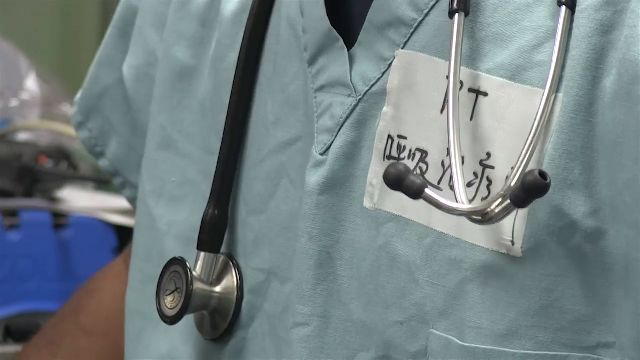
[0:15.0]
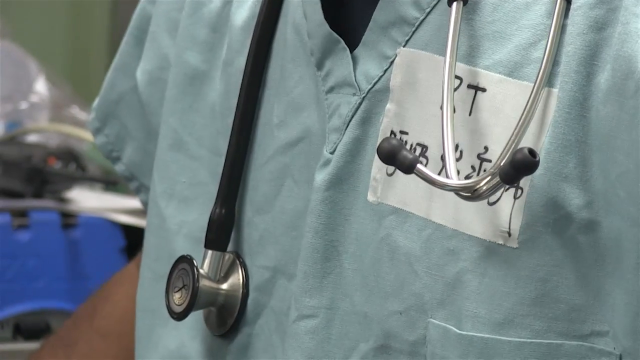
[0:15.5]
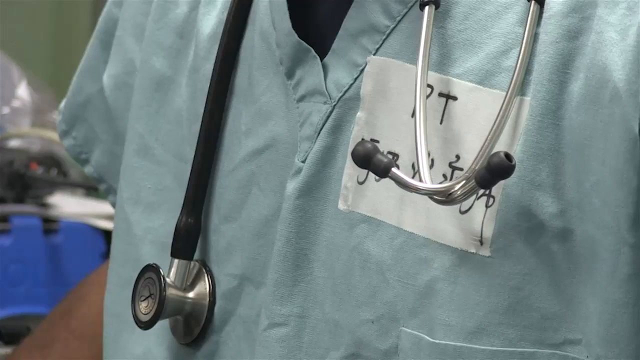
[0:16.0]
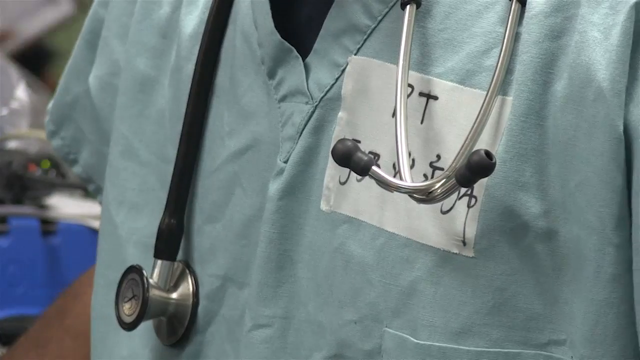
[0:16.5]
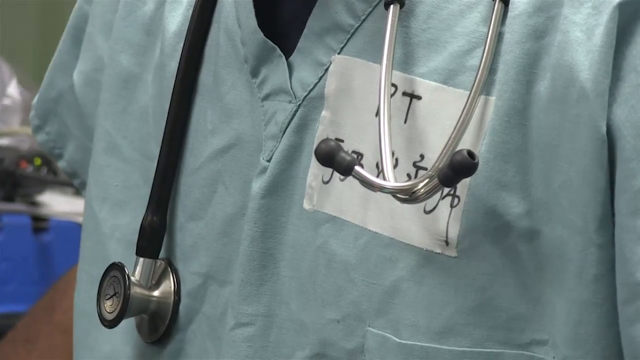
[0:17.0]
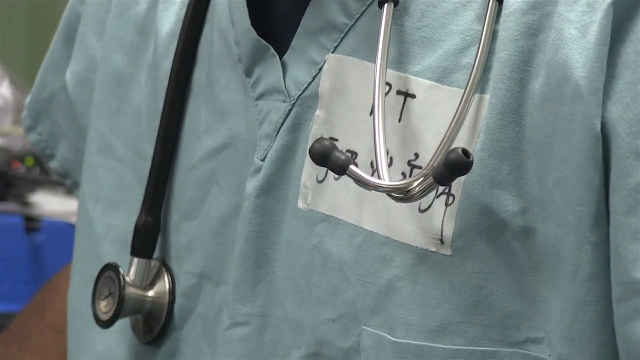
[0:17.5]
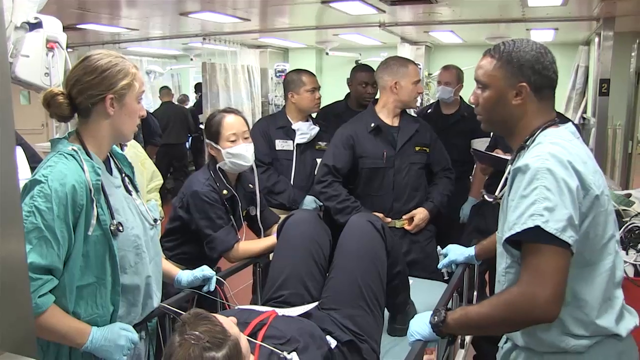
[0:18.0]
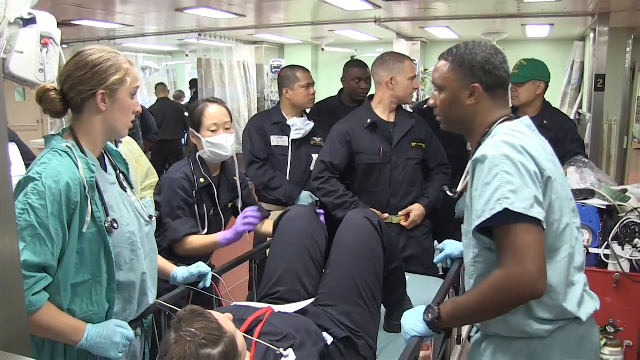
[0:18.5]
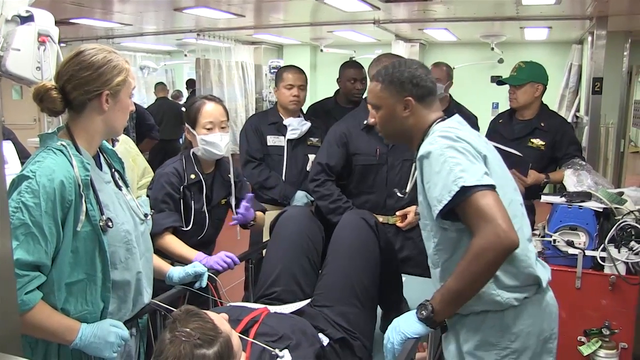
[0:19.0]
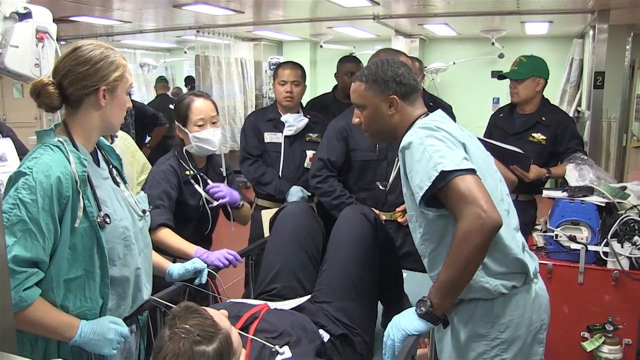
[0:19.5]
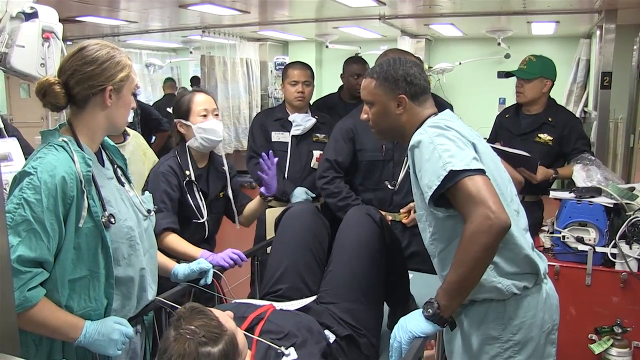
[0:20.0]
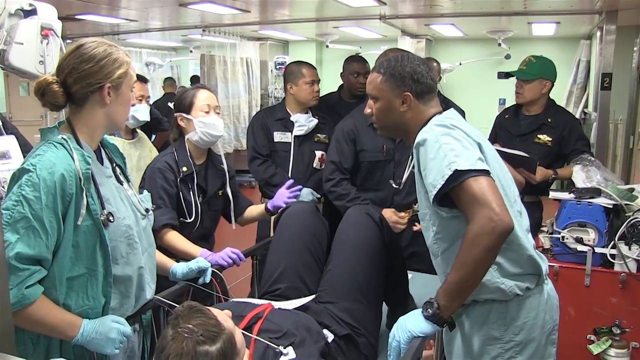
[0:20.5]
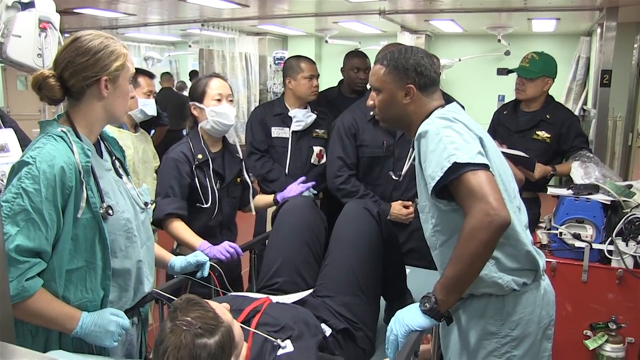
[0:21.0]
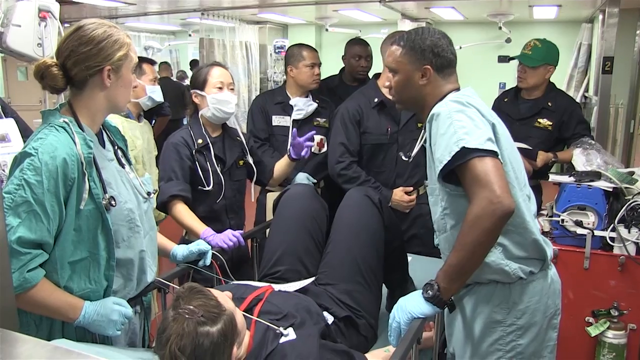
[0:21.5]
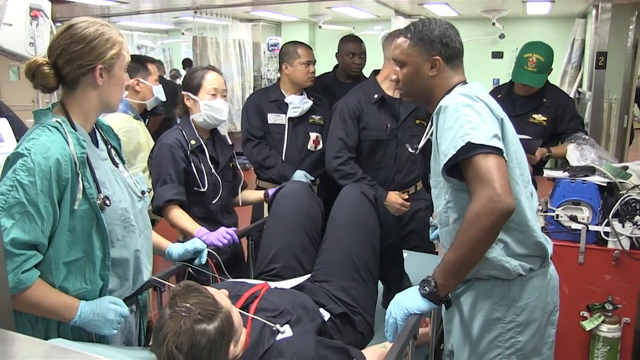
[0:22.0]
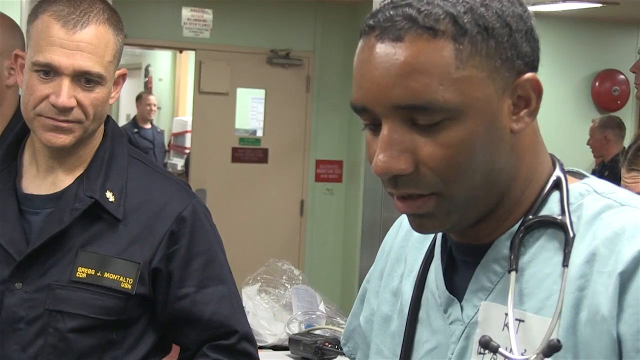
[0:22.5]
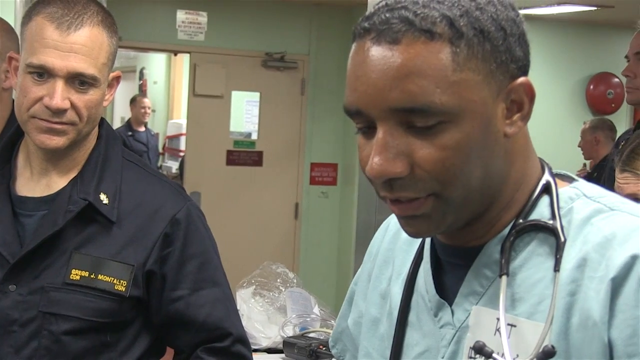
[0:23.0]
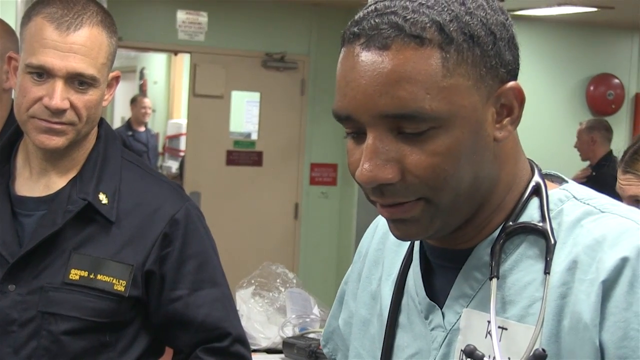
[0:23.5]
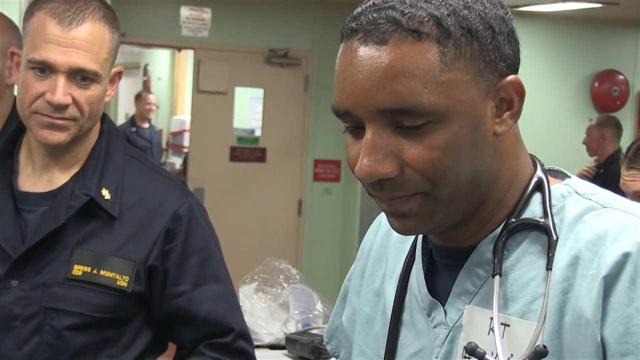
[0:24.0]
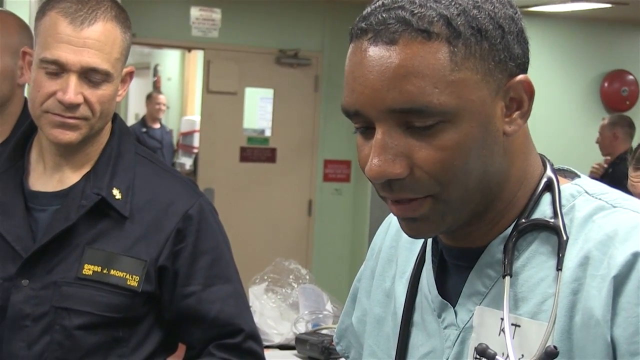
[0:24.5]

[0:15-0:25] The video starts with a close-up of a stethoscope. Cortez Brown, the respiratory therapist, has the stethoscope around his neck and talks with different medical staff. A patient lies on a gurney with their knees up. Many people stand around talking to the respiratory therapist; one of them, who looks like a nurse, is wearing a mask. They look on and talk to the patient. He gets information from what appears to be a nurse about what is going on with the patient.